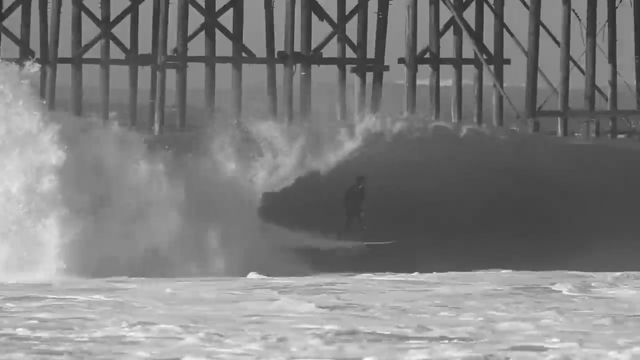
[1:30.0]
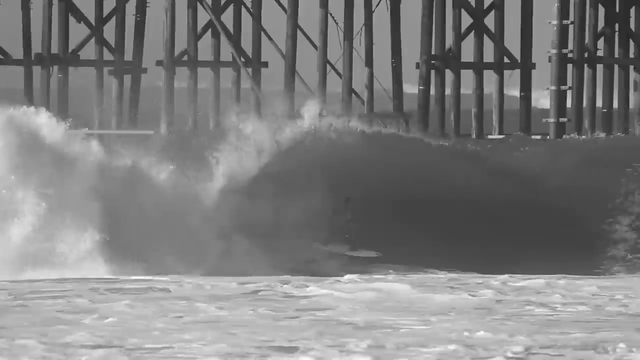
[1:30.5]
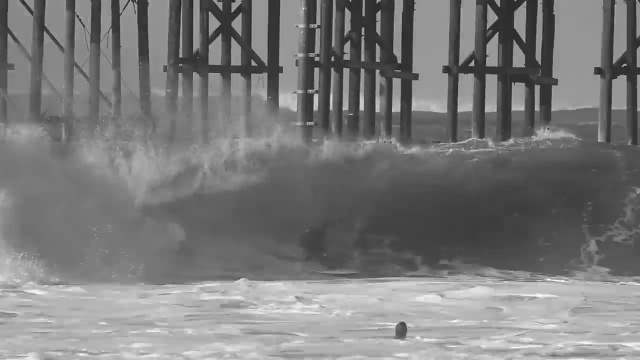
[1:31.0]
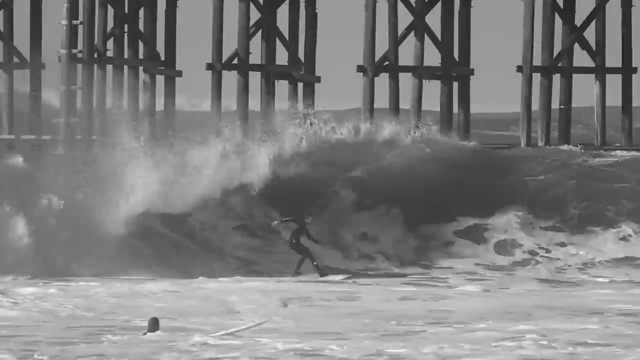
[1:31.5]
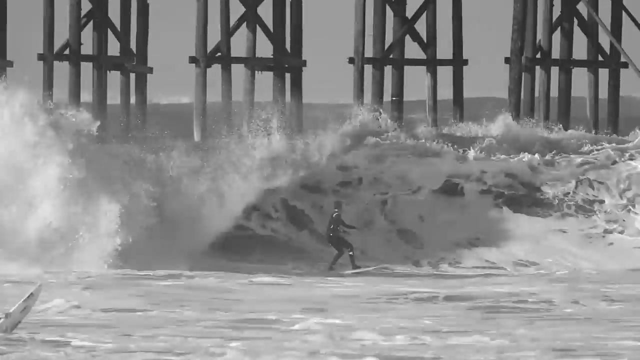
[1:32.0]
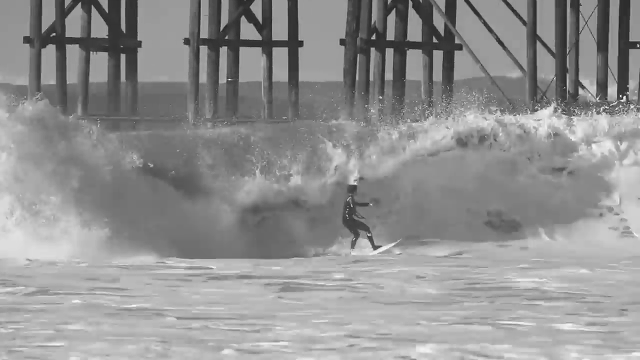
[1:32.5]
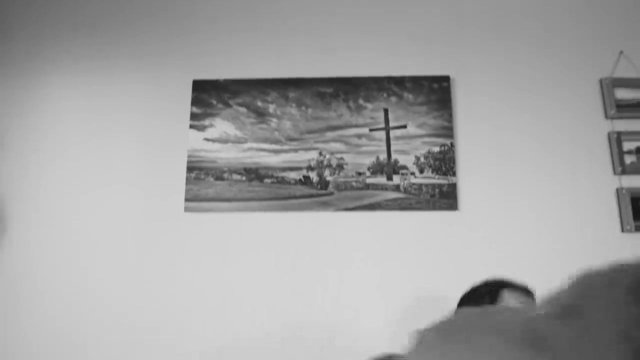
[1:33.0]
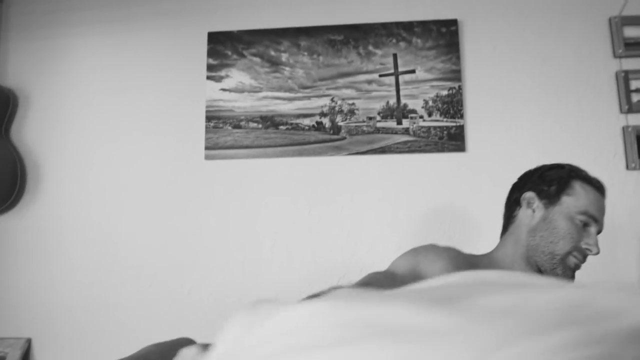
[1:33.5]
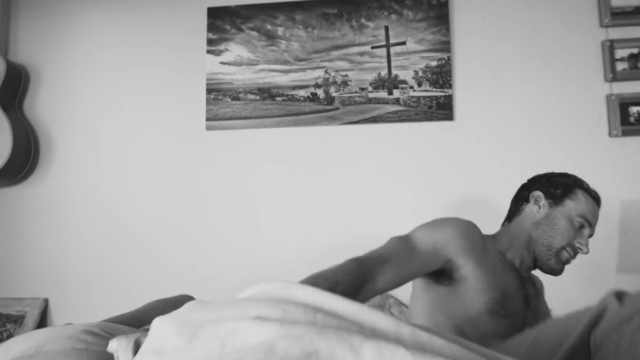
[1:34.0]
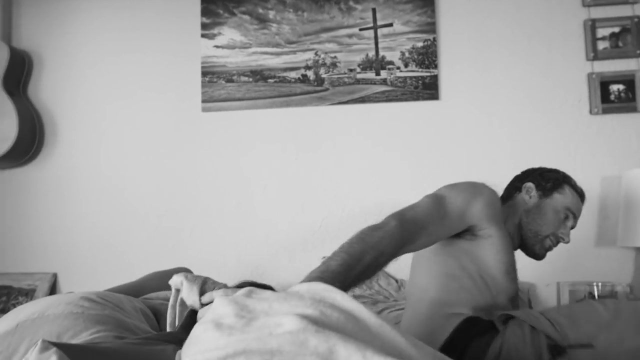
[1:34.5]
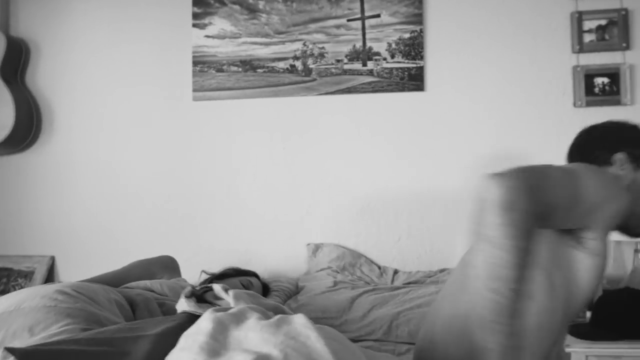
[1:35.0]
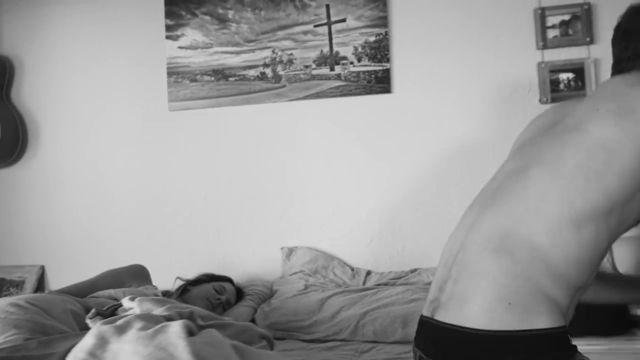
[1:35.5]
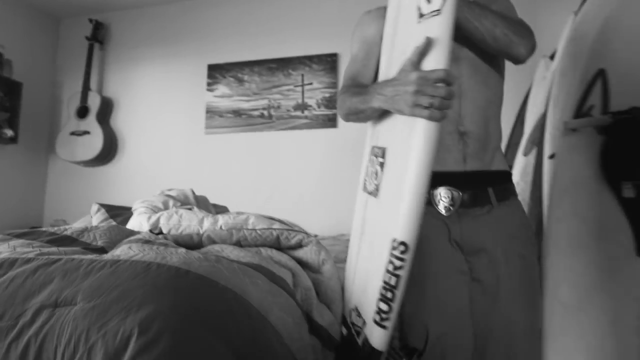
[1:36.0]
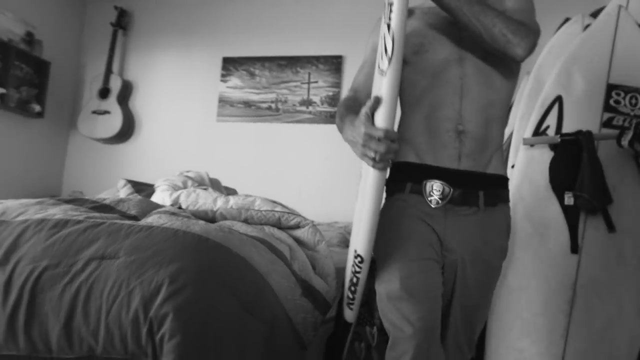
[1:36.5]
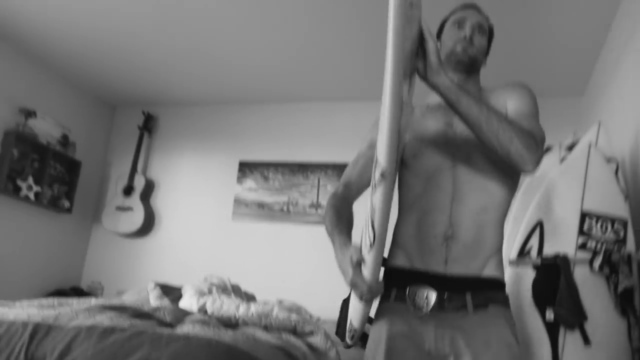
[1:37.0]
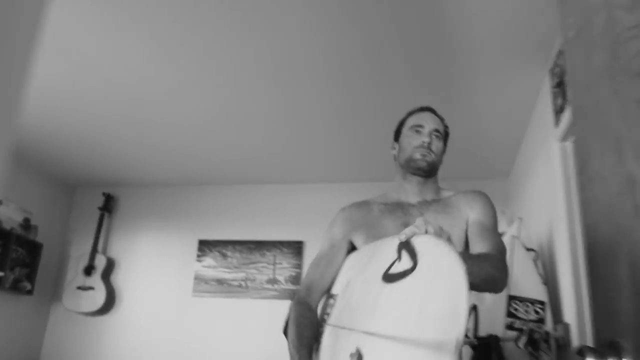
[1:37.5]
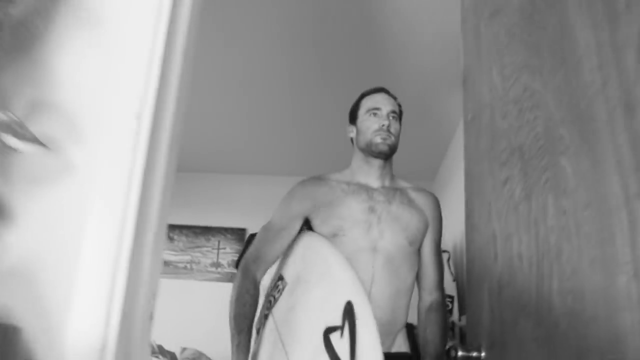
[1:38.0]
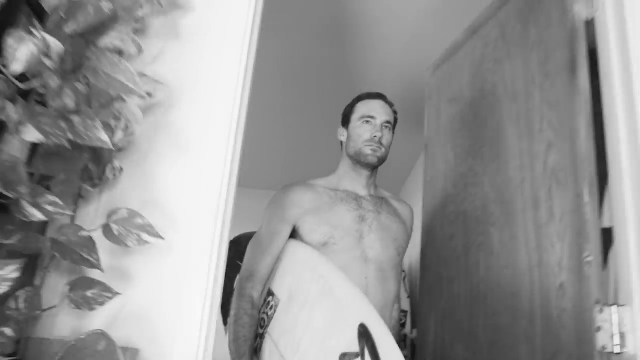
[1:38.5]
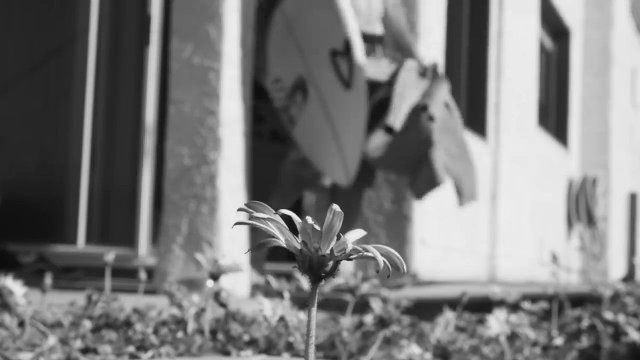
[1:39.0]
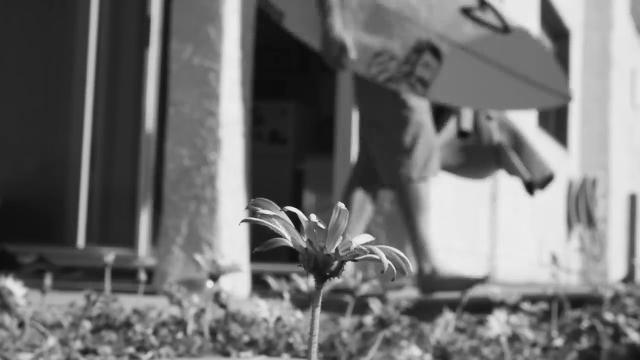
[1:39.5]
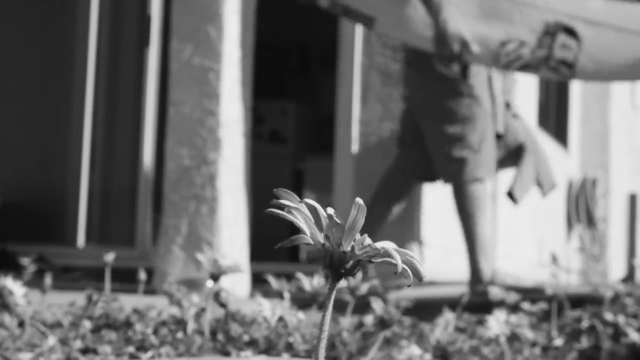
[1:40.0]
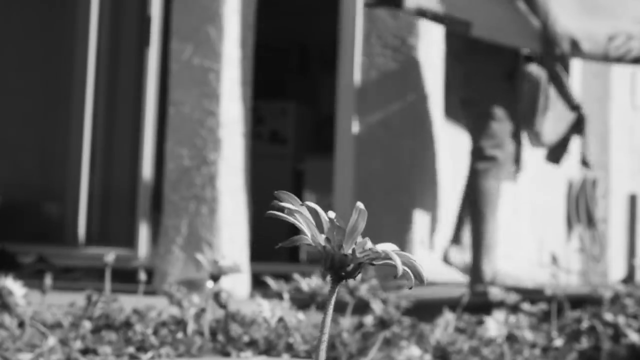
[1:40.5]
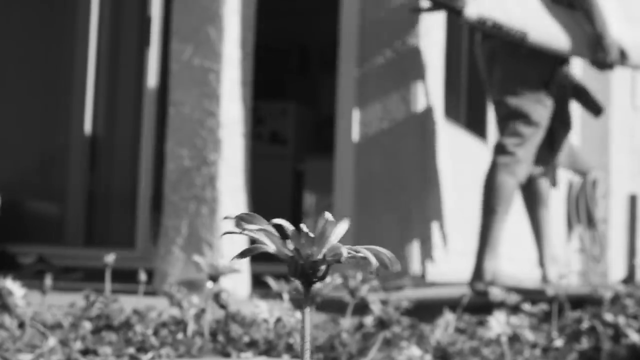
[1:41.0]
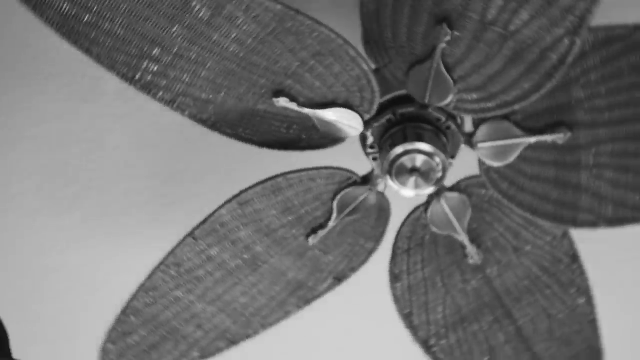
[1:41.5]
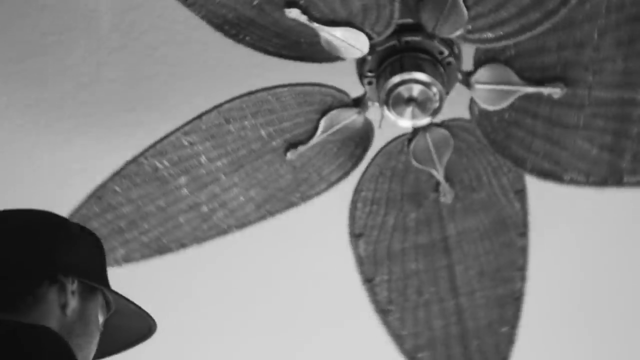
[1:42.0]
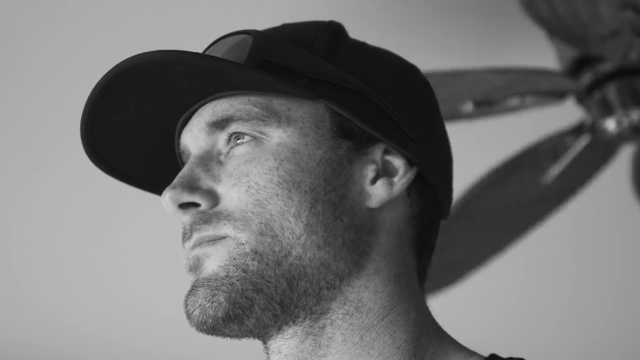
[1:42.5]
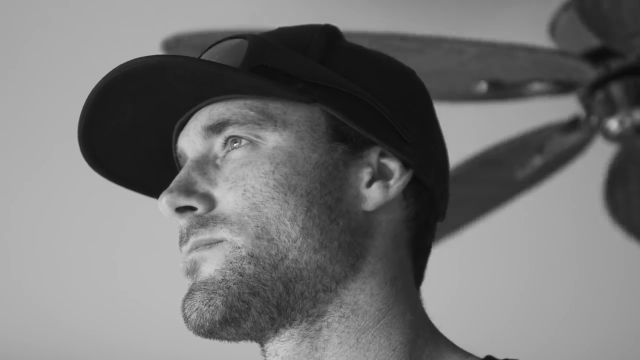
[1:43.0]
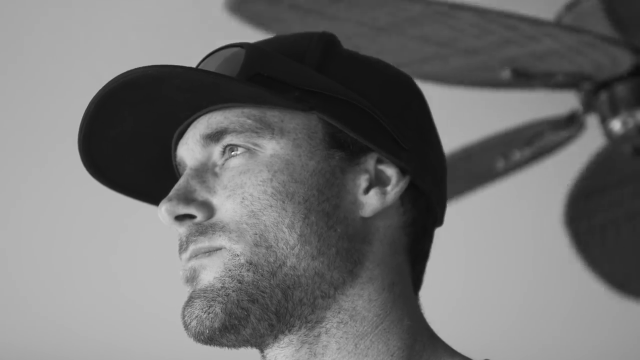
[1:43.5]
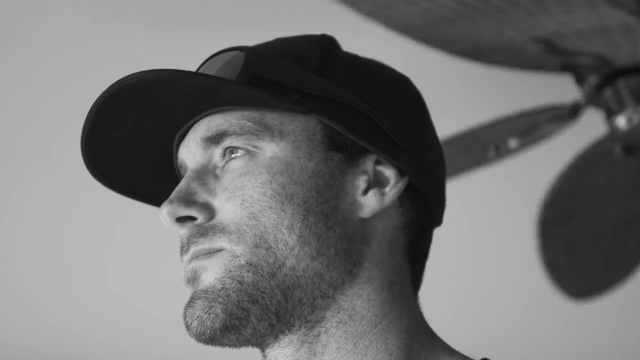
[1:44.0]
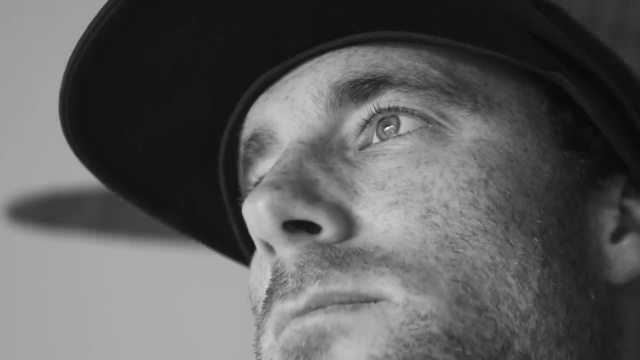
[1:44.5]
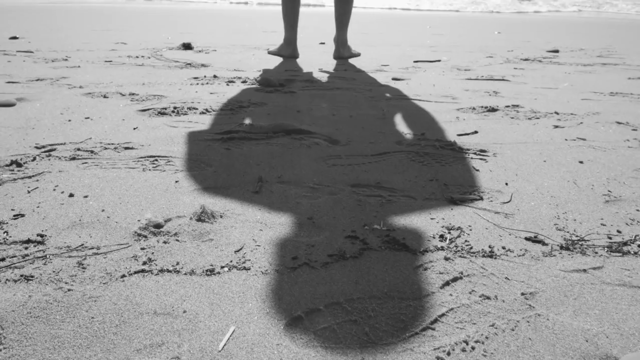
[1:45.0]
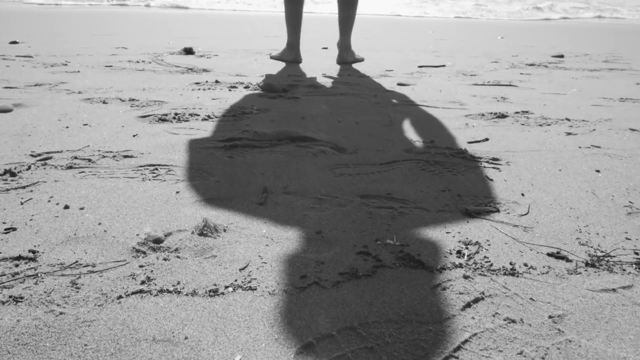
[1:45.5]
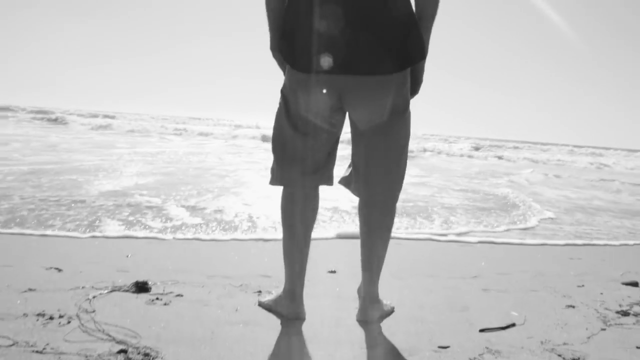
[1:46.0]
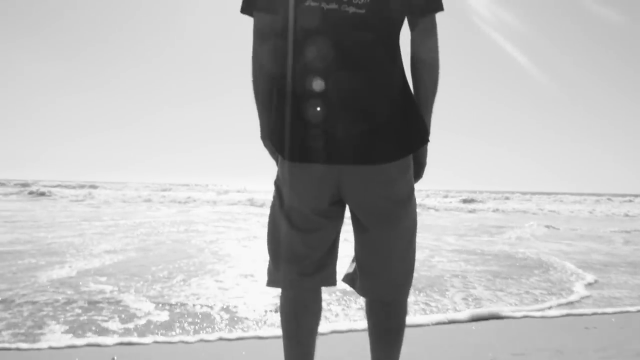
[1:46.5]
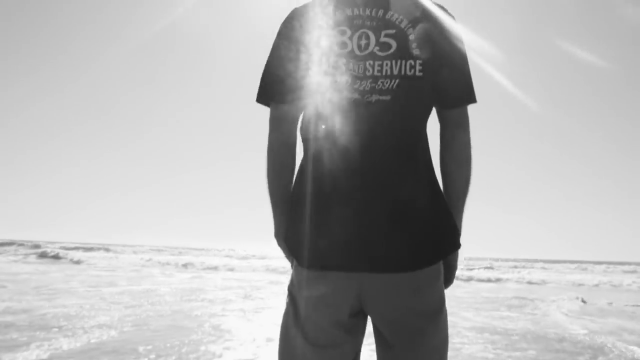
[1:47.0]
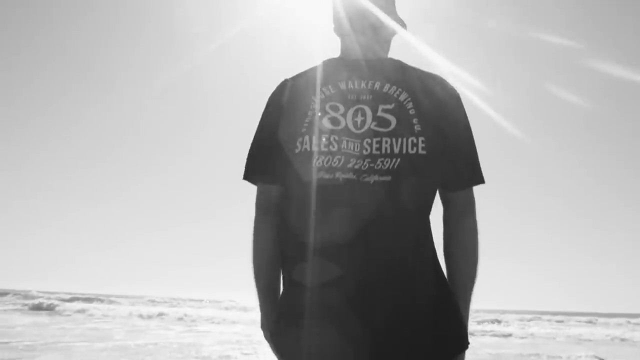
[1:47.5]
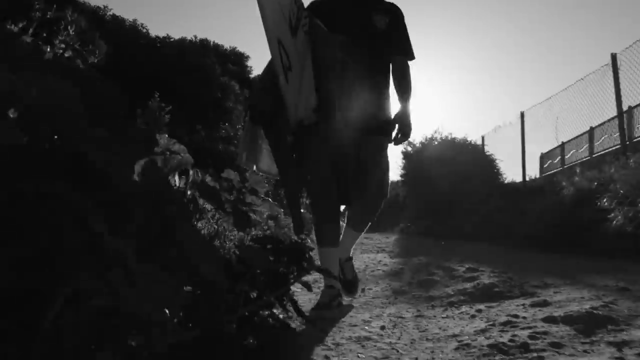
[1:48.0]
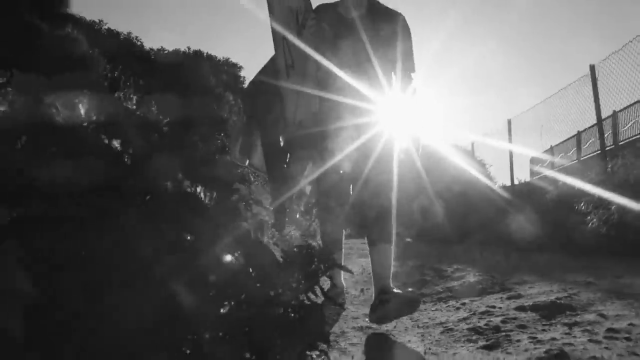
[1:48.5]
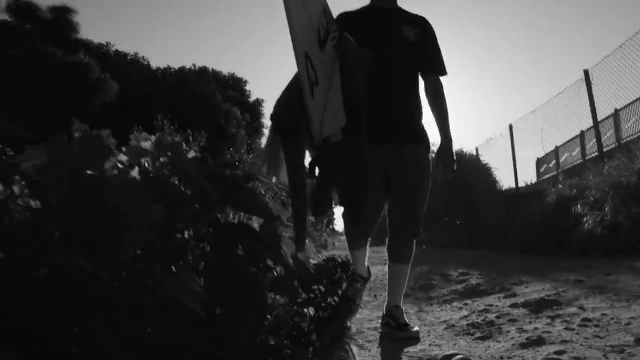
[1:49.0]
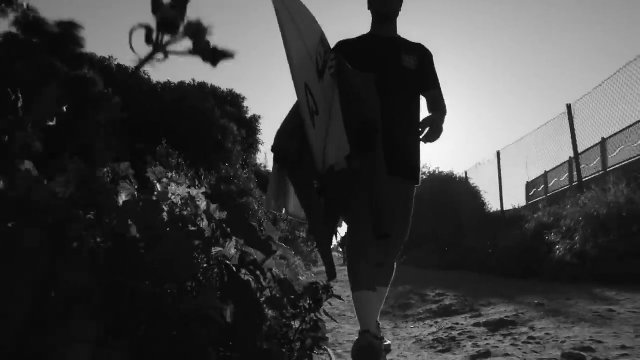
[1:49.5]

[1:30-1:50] A man rides a wave, exiting the curl or tube, standing up and going from left to right. He wears a full wetsuit, and behind him is a pier with the tall poles that hold it upright. It is daytime. He squats down just a little. The video changes to an indoor scene in which a shirtless, slightly unshaven man gets out of bed. Behind him on the wall is a painting of what looks like a cross at a little courtyard with a little wall around it, clouds in the sky, a concrete path leading up to it, and grass. On the left a guitar hangs on the wall, and on the right are some pictures. The man grabs his surfboard and walks away from an unmade bed. To the right is a sign that says "805" and several surfboards leaning against the wall. The man walks out his front door wearing shorts, with a shirt in his left hand. A flower that looks like a daisy is in front of the camera. A ceiling fan spins on the ceiling. The man's face is shown from below, looking up at a 45-degree angle; he wears a black baseball cap that comes down over his ears, with some glasses hanging on the front above the brim, and a fan spins above his head. The scene switches to the ocean, where a man in a shirt and shorts and no shoes stands on the sand as the waves come close to him; the back of his shirt says "805 sales and service," and the sun is on the far side of him. Then the man walks toward the beach, this time wearing shoes, socks that come up to his calves, shorts and a t-shirt, carrying his surfboard and a wetsuit in his right hand.